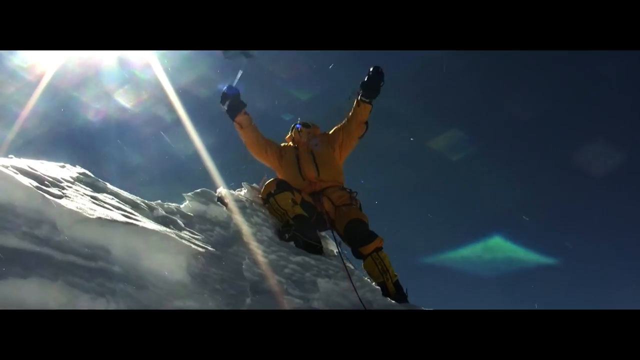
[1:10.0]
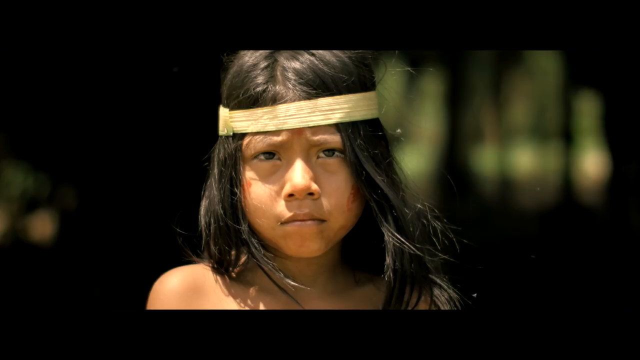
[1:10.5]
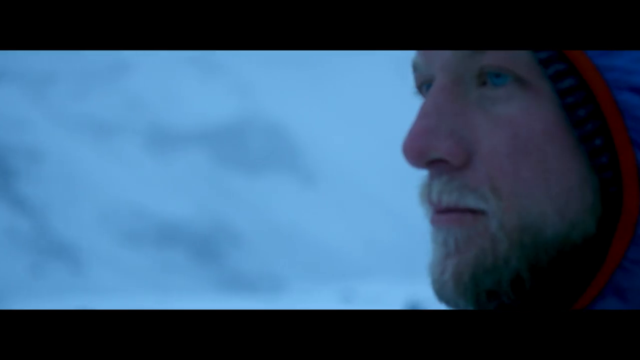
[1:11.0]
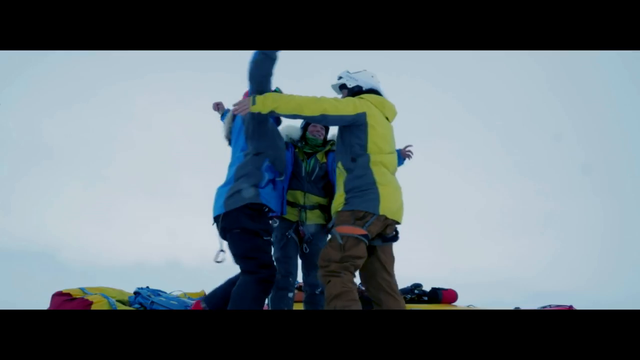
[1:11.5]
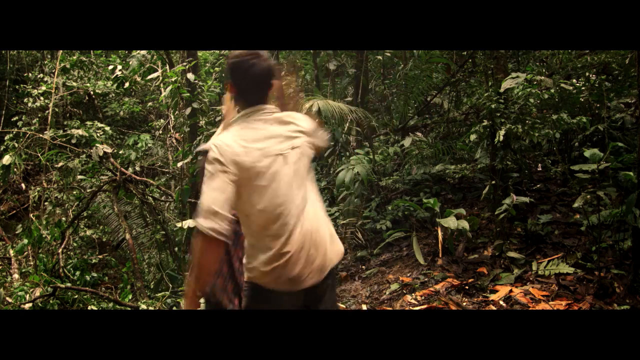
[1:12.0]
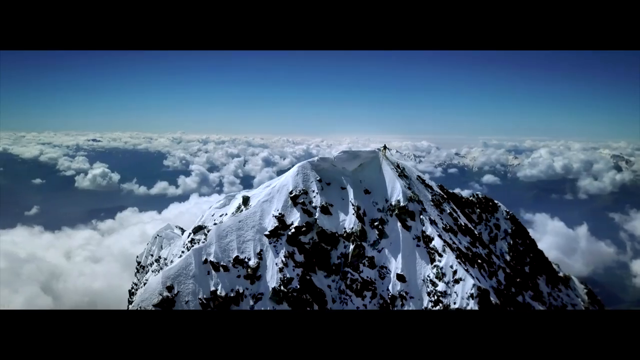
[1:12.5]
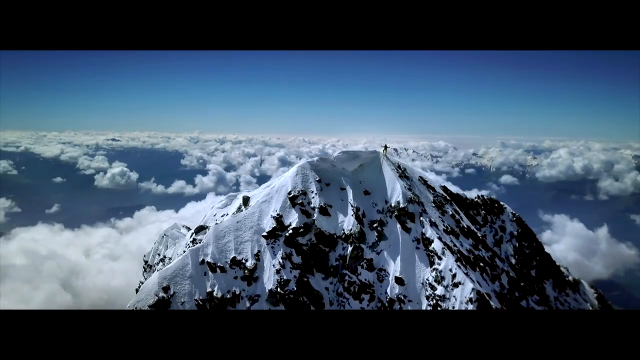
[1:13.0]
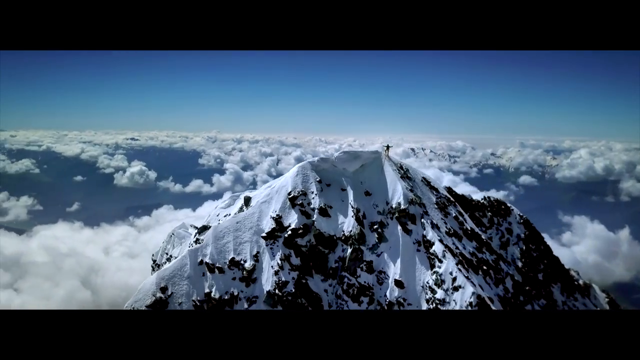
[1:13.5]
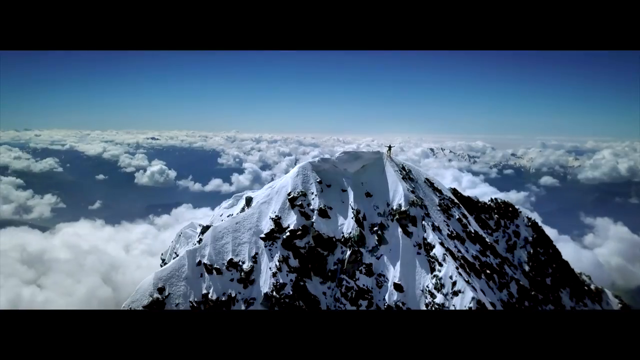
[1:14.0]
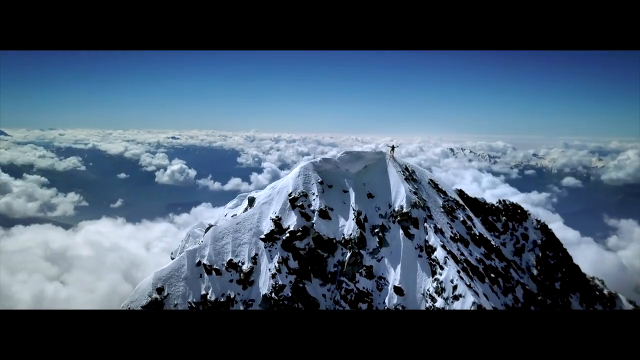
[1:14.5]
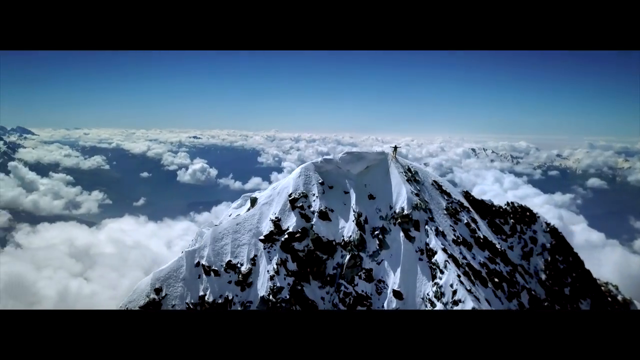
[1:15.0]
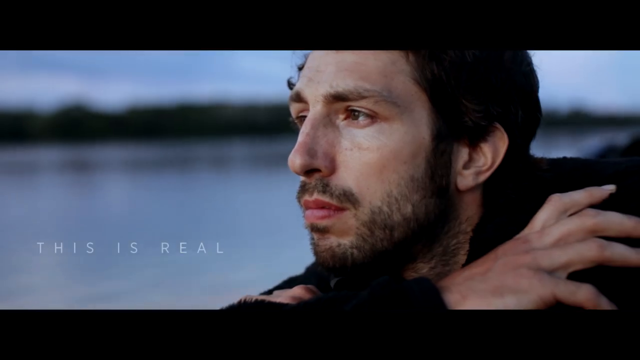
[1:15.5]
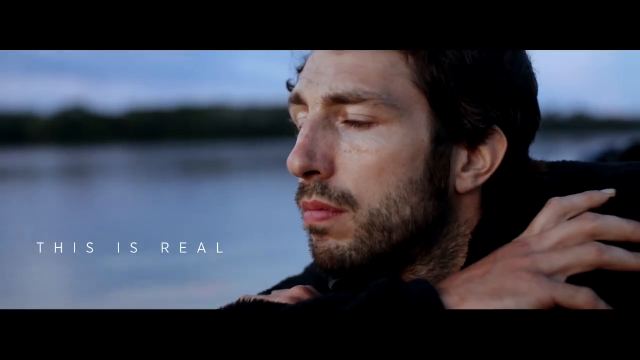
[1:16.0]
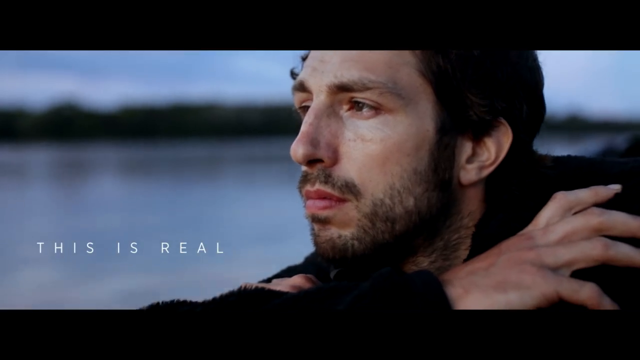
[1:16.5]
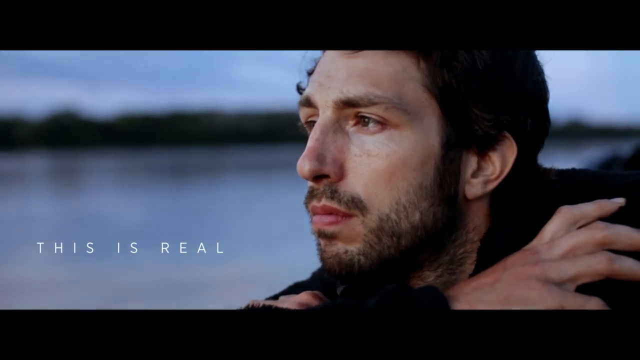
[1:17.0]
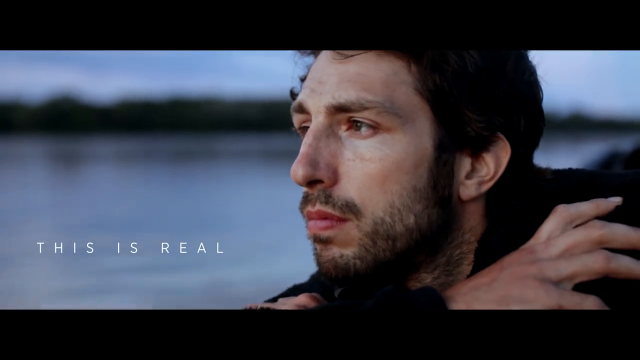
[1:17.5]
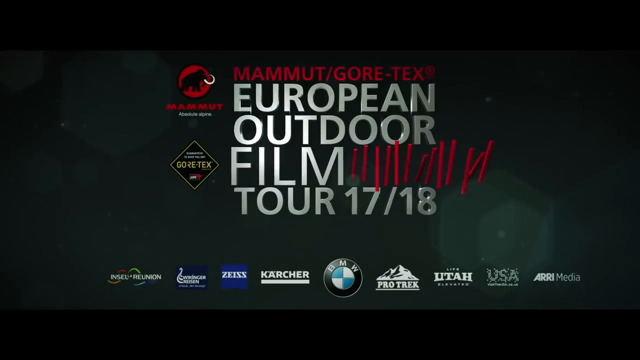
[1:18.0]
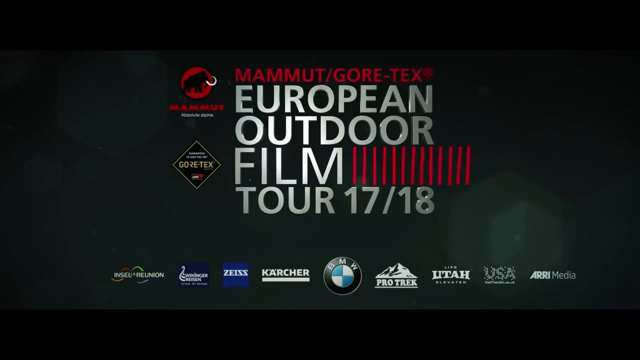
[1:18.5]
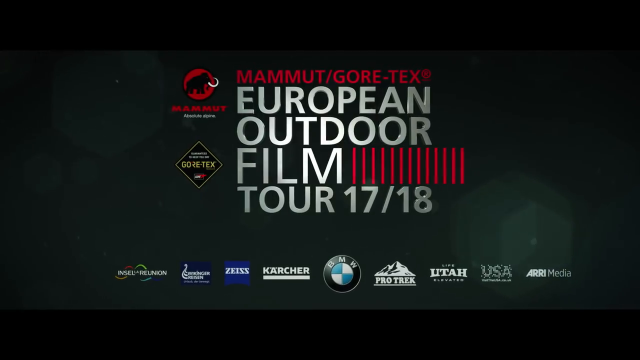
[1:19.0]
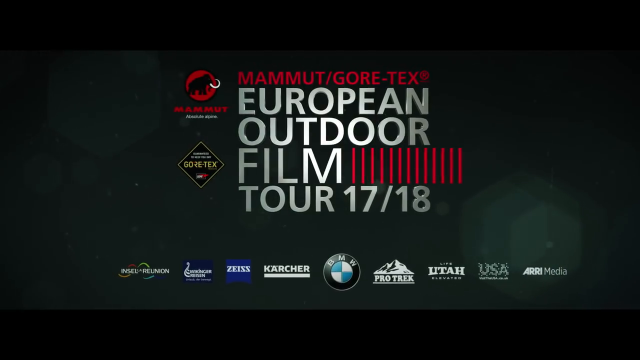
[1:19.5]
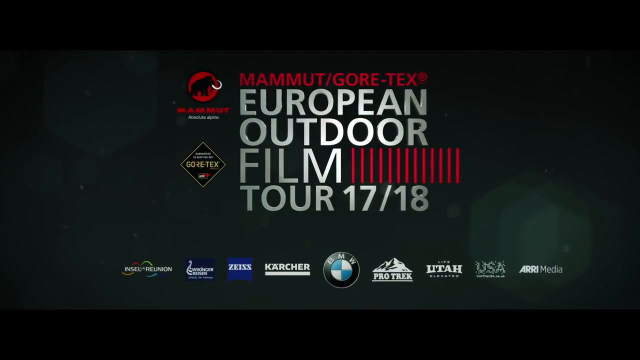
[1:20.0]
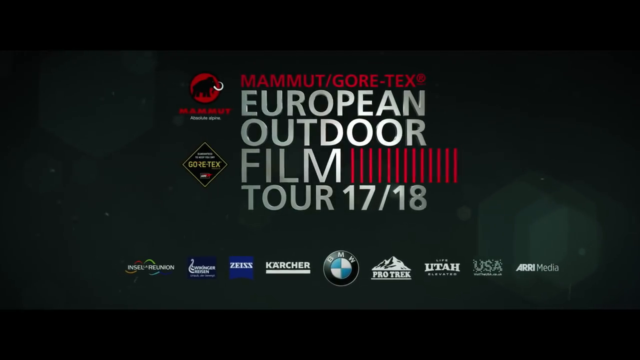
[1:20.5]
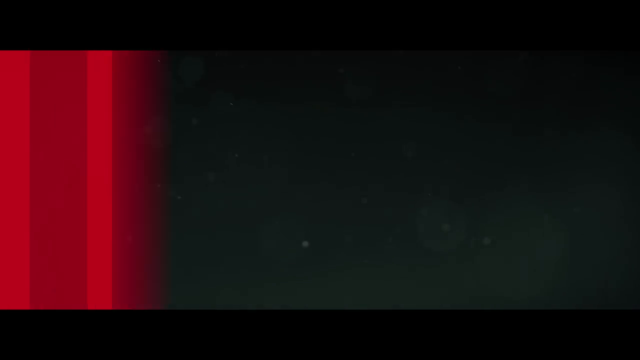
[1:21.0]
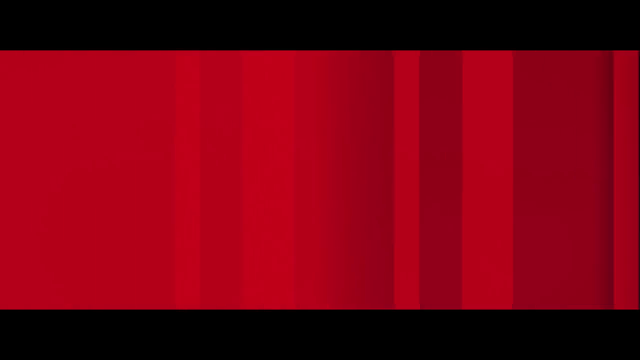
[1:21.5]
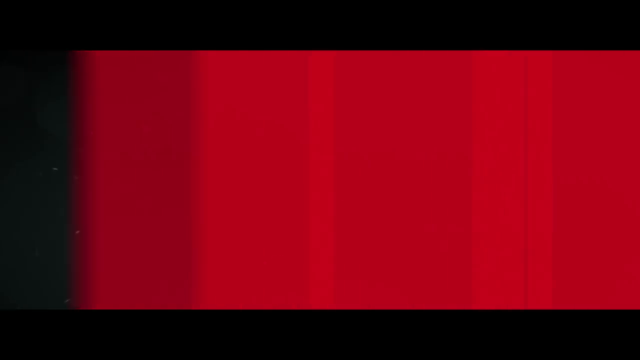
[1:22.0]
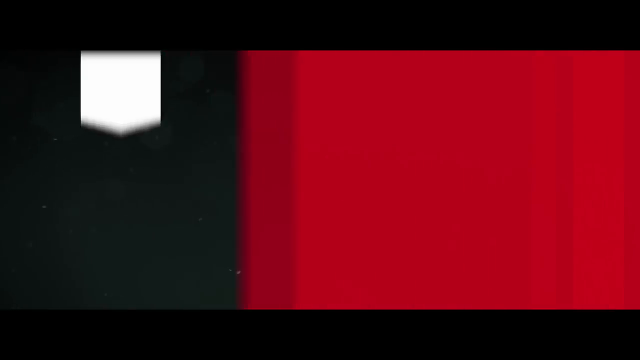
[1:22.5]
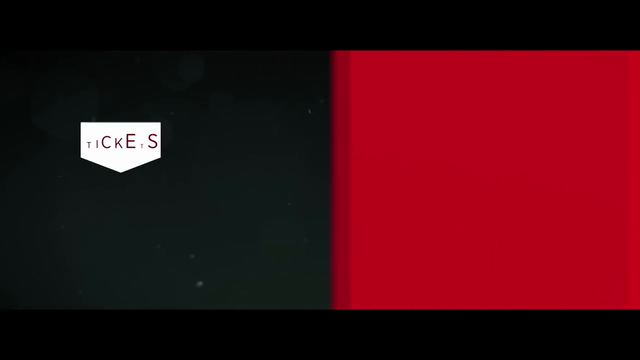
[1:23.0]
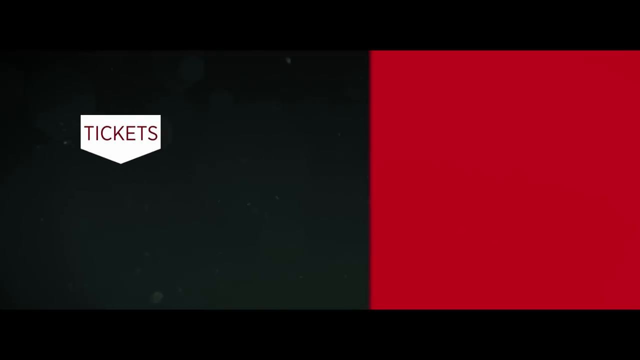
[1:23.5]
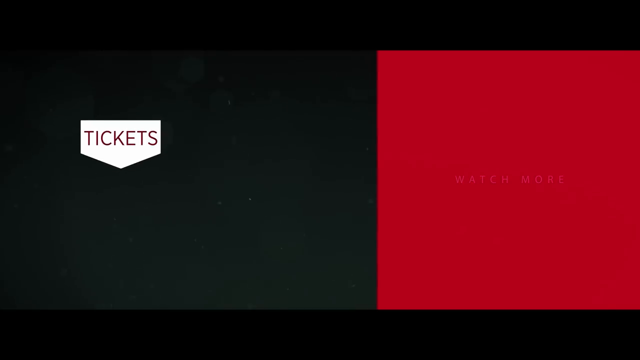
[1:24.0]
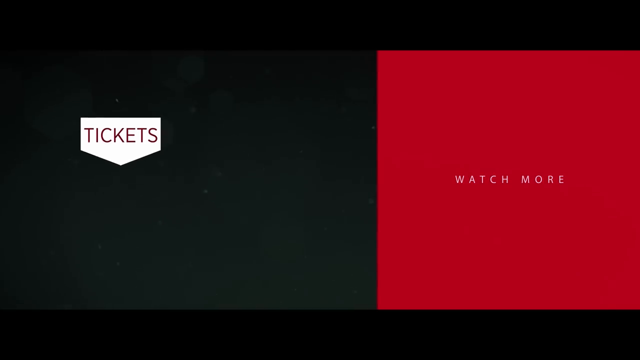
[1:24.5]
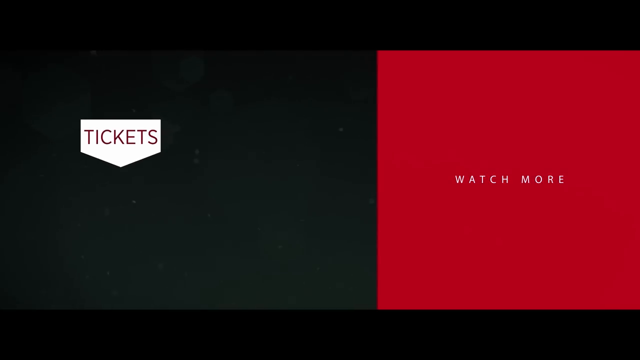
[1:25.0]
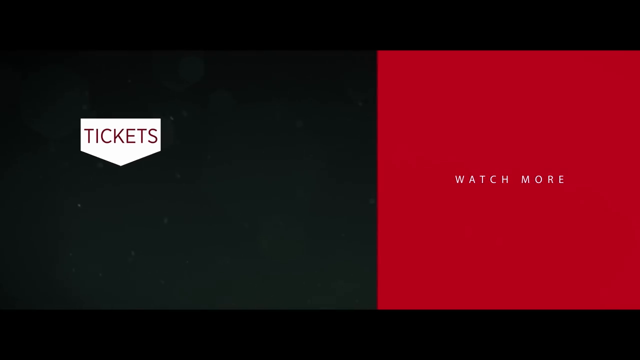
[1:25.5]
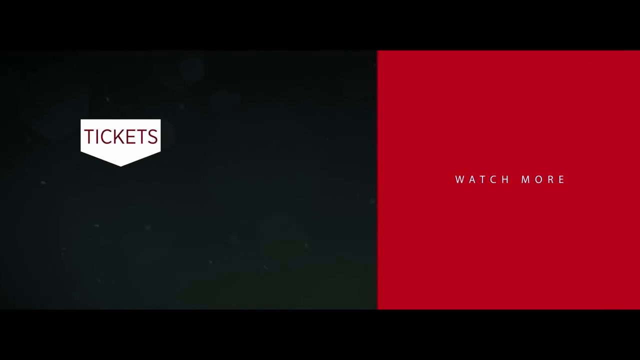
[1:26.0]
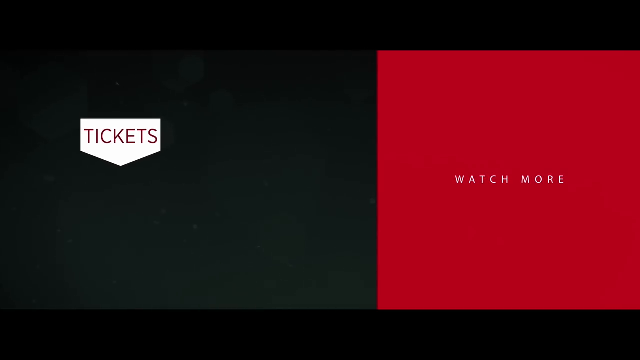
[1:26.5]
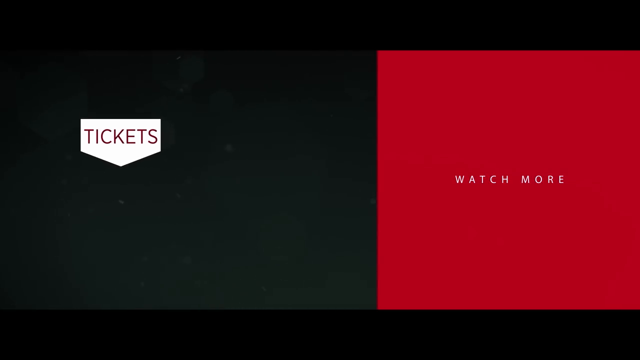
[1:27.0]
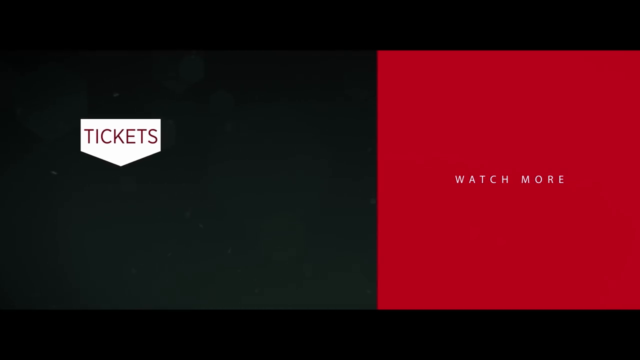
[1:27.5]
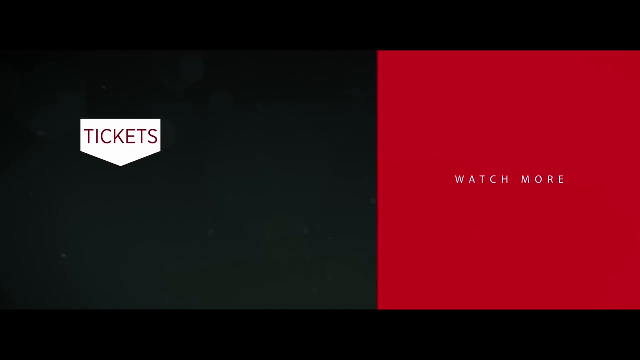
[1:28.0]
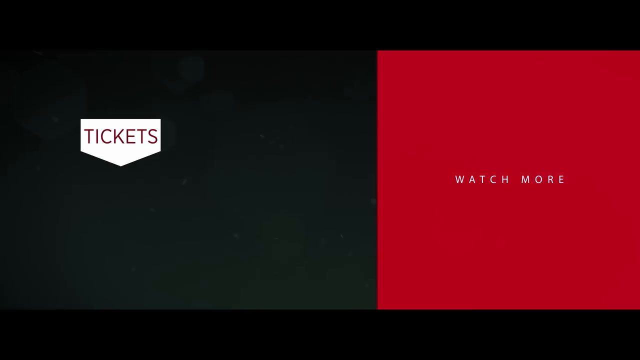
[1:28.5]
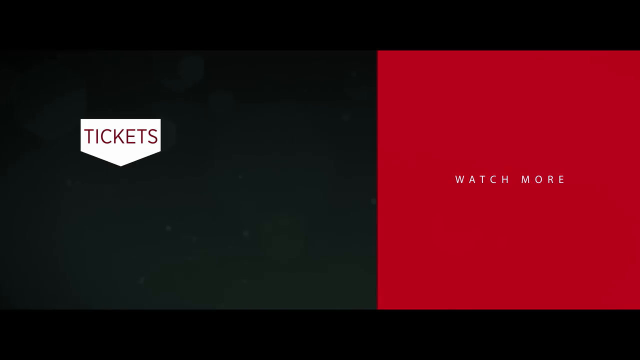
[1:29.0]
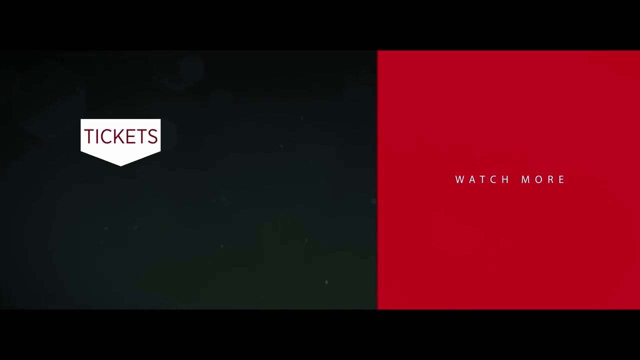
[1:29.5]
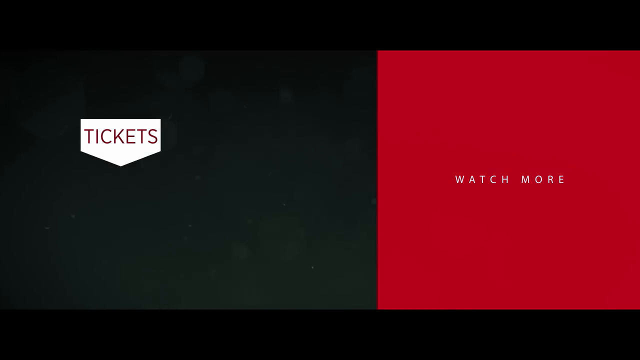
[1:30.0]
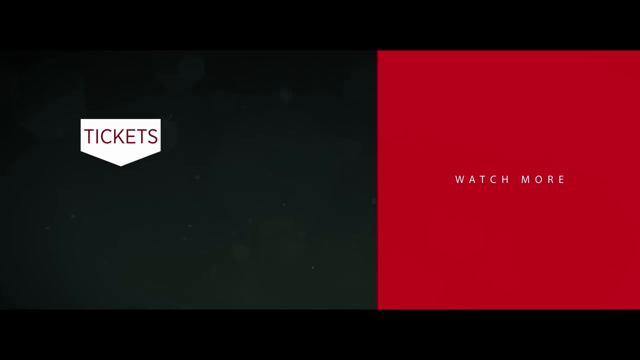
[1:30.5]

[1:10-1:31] A series of very fast shots follows. Someone who has reached the top of a mountain holds his hands in the air in a celebrating gesture. A headshot shows a kid with long black hair and a serious expression. Two men smile, one of them wearing a biker outfit and helmet. Three people wearing heavy winter clothing hug each other on the snow. A man and a woman give each other a high five, with a forest around them. A mountaintop is surrounded only by clouds and sky, with a very small figure of a person on it. A man looks into the distance, and beside him is the text "This is real". The same animation from the beginning of the video appears, with "European Outdoor Film Tour" written on it. Right after, another animation briefly turns the screen red and then shifts to a split screen, black on the left and red on the right. On the red side is the text "Watch More", and on the left is a small logo with the text "Tickets" on it.